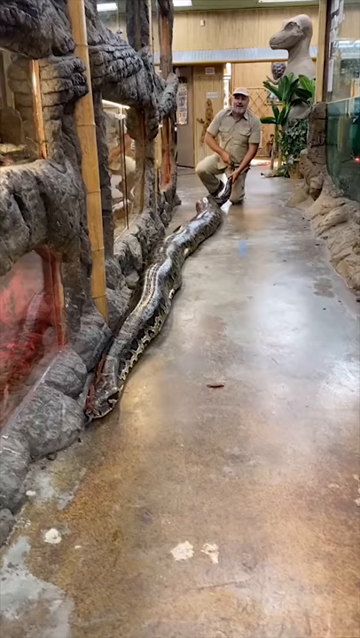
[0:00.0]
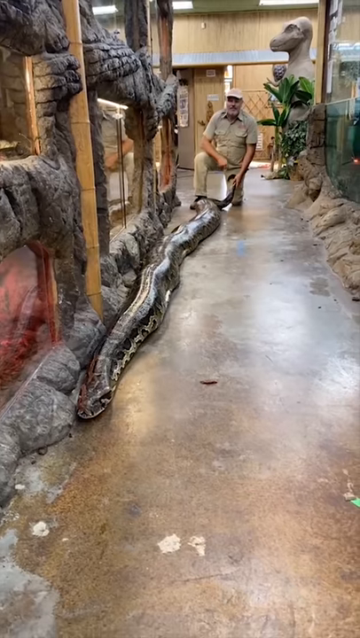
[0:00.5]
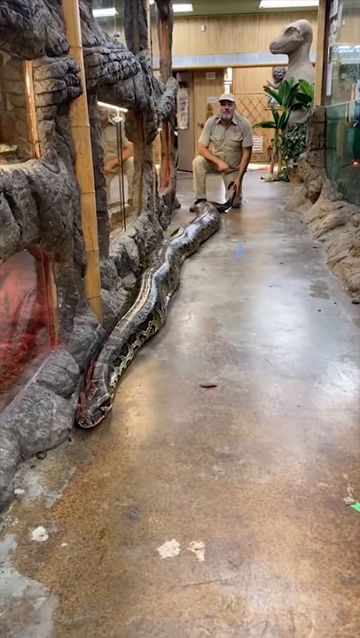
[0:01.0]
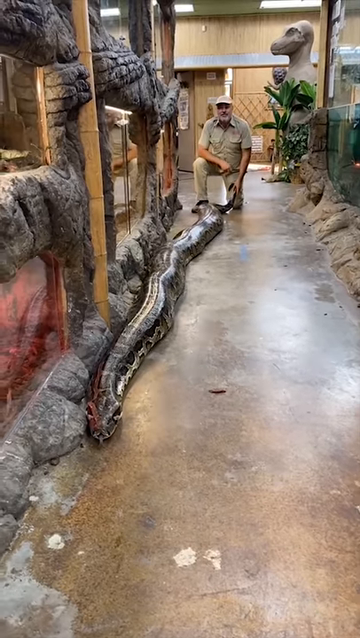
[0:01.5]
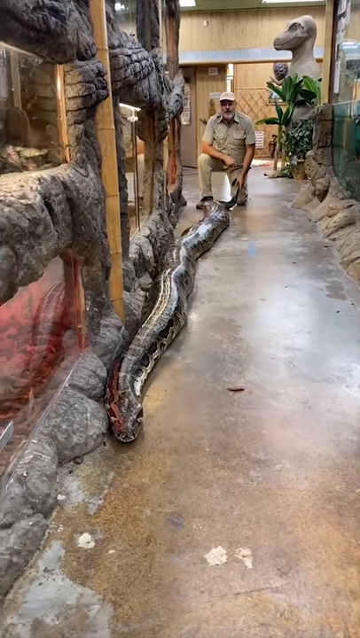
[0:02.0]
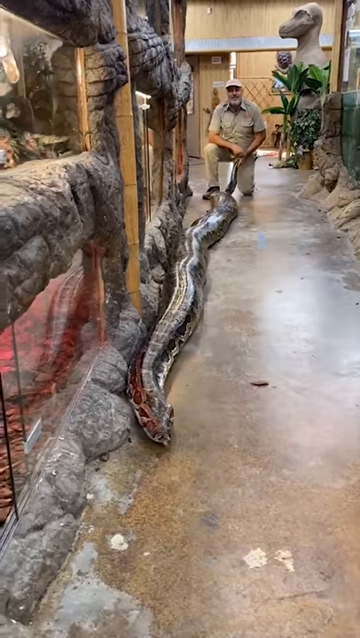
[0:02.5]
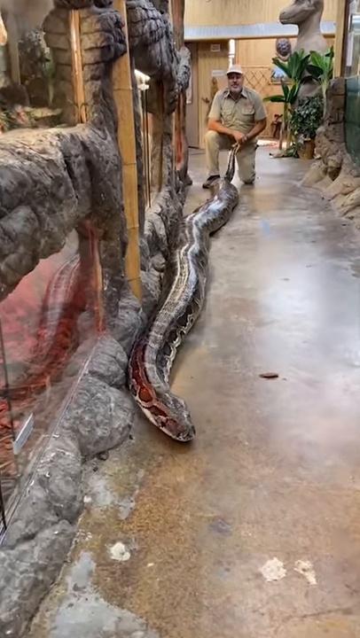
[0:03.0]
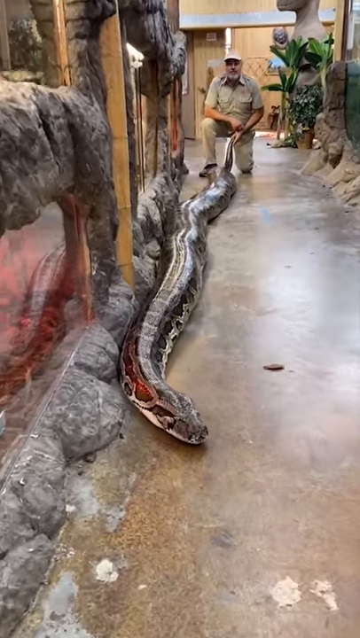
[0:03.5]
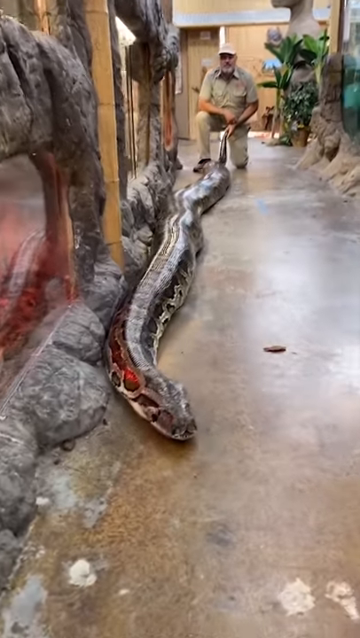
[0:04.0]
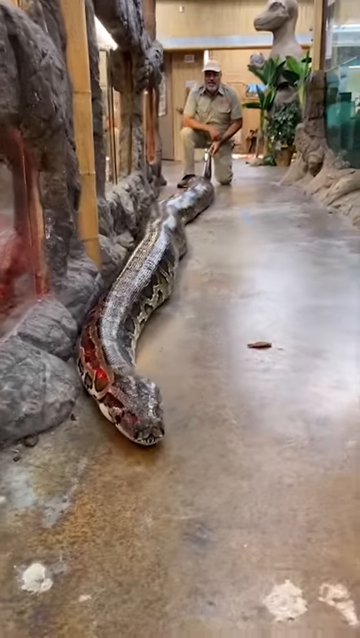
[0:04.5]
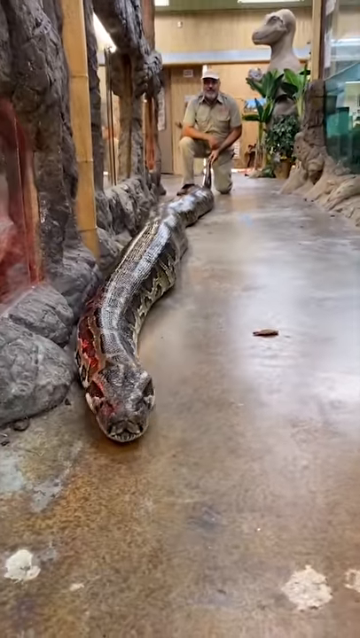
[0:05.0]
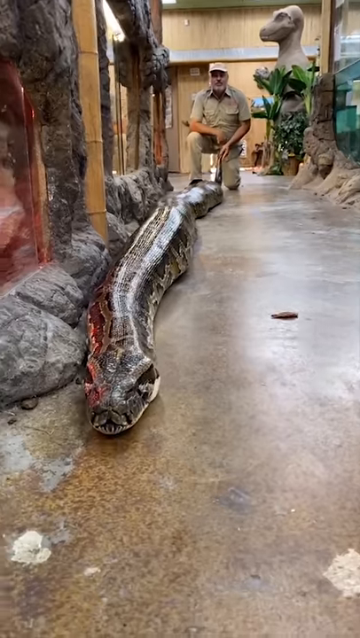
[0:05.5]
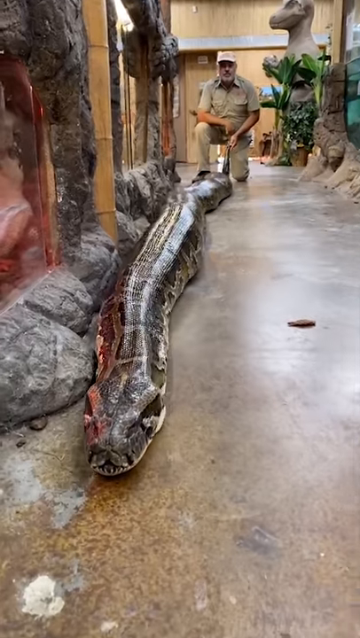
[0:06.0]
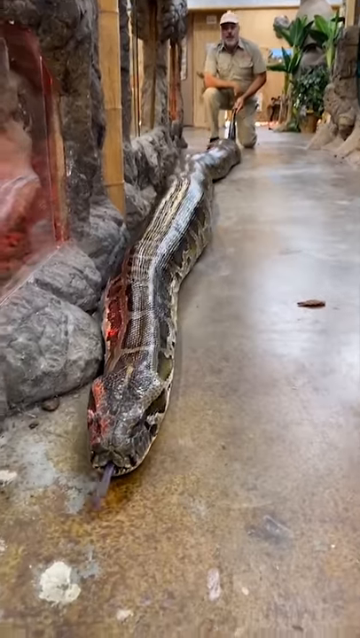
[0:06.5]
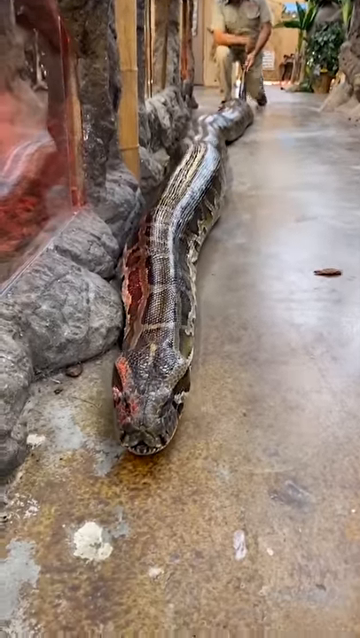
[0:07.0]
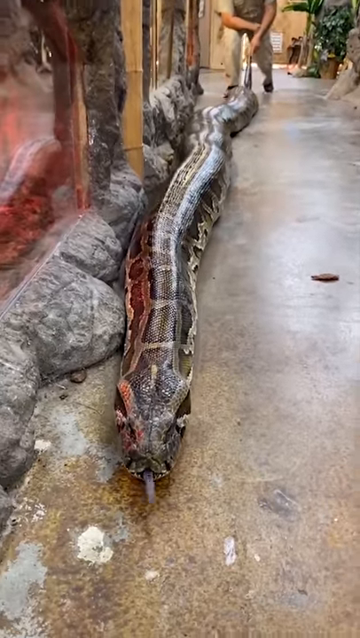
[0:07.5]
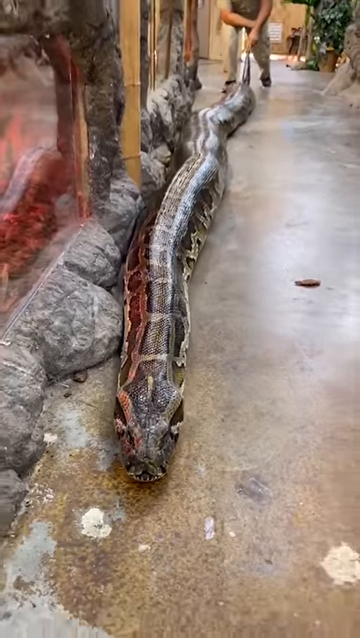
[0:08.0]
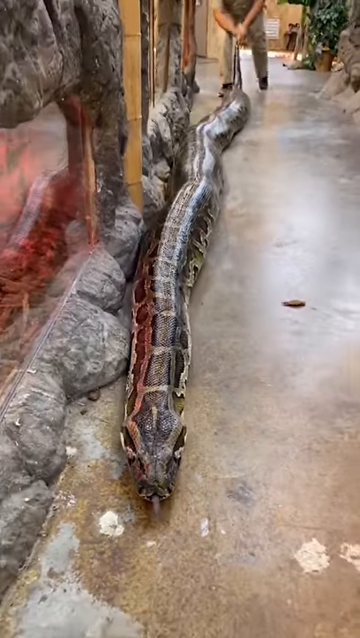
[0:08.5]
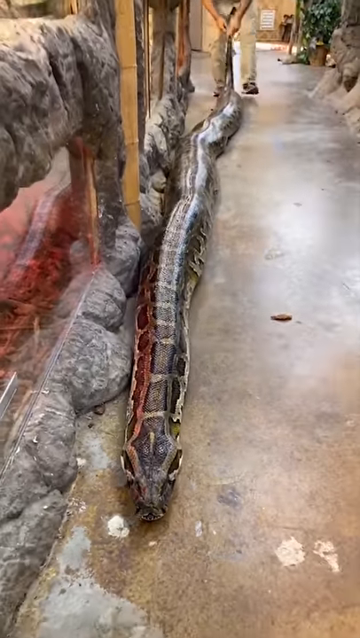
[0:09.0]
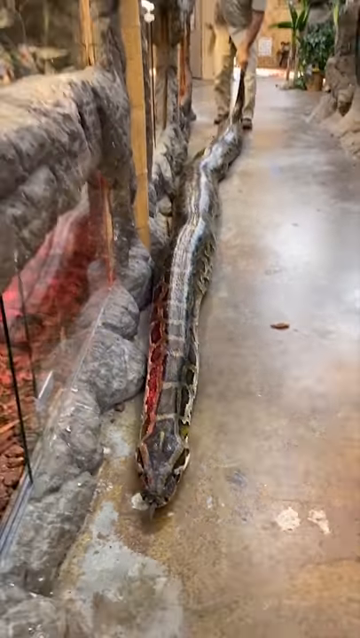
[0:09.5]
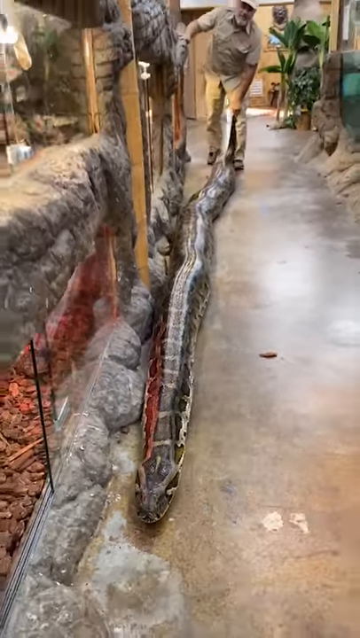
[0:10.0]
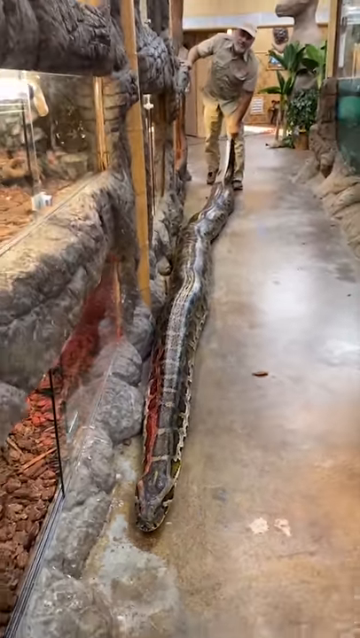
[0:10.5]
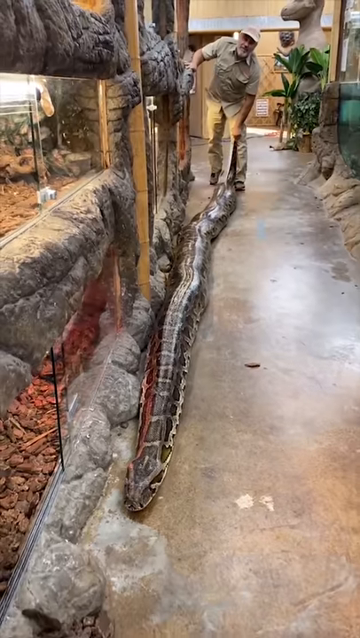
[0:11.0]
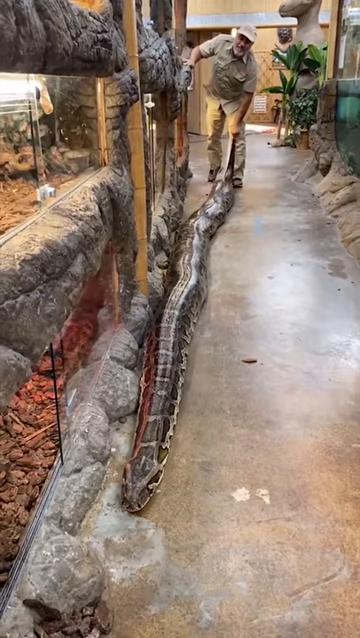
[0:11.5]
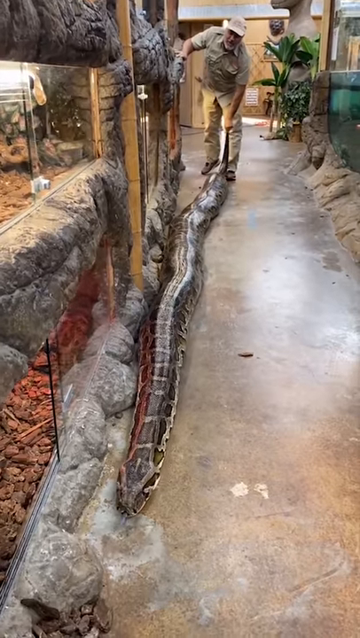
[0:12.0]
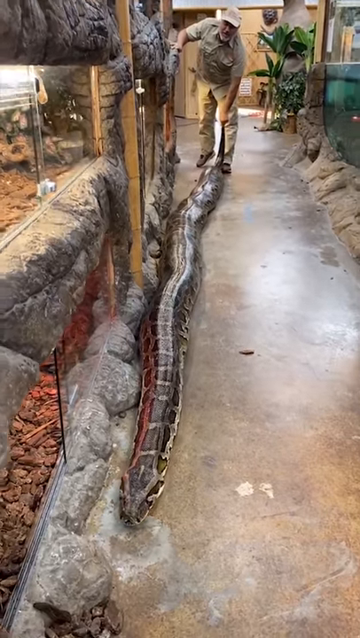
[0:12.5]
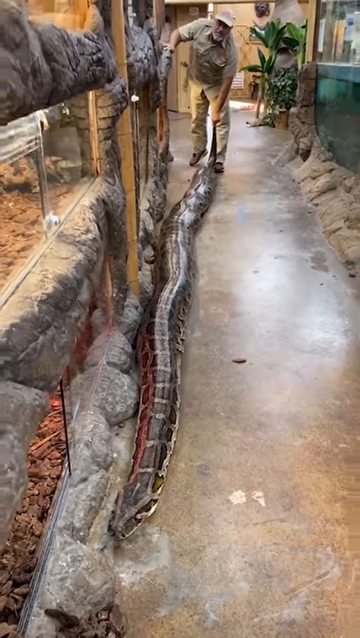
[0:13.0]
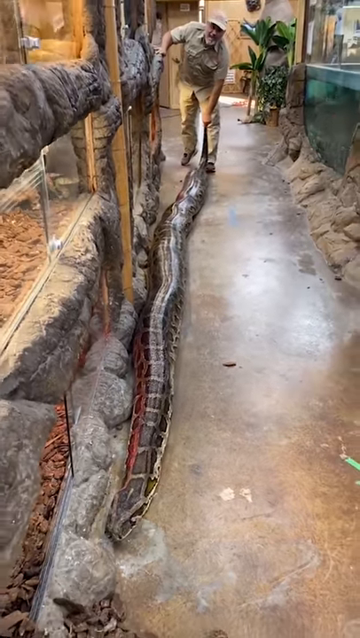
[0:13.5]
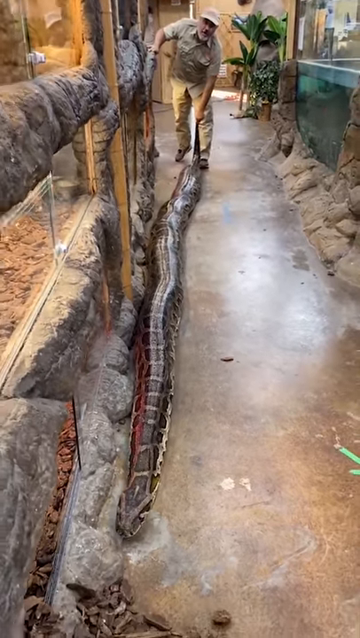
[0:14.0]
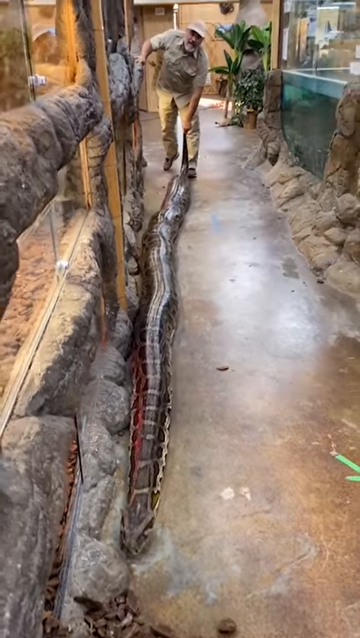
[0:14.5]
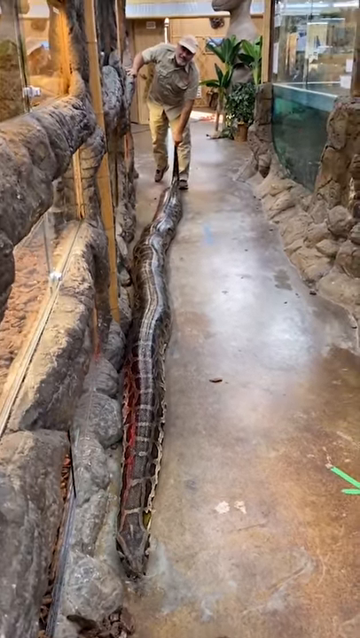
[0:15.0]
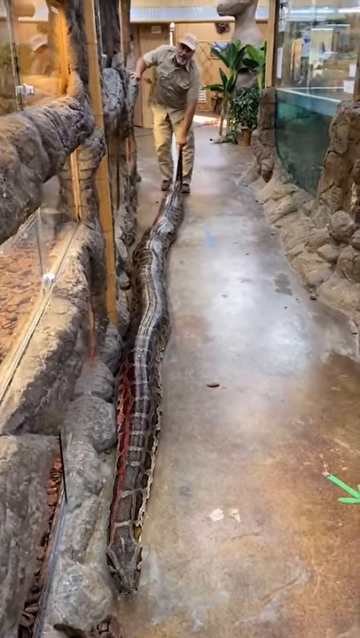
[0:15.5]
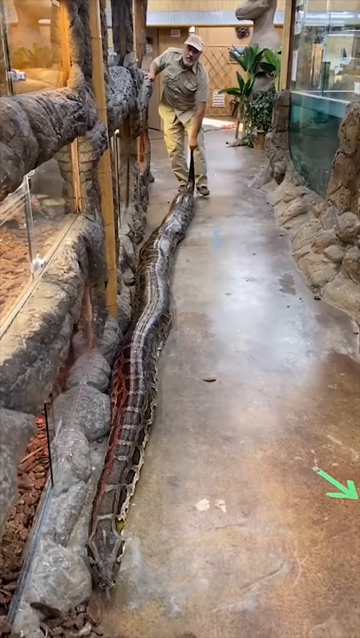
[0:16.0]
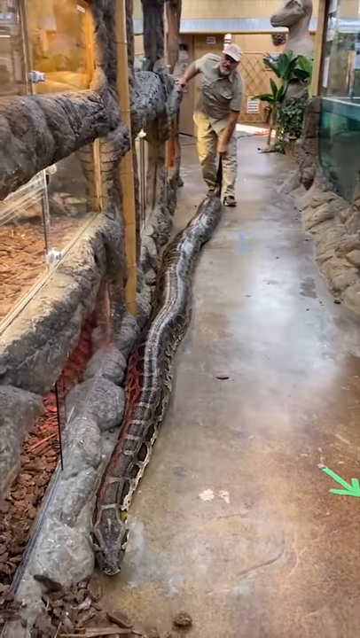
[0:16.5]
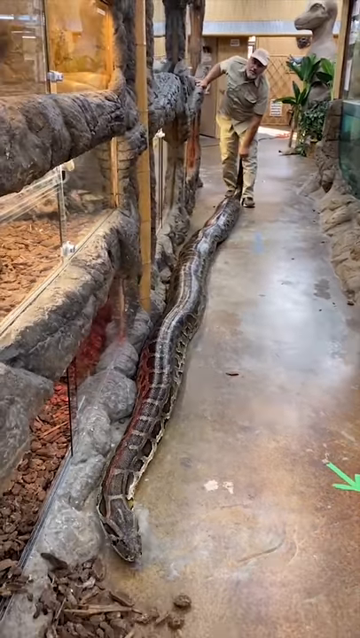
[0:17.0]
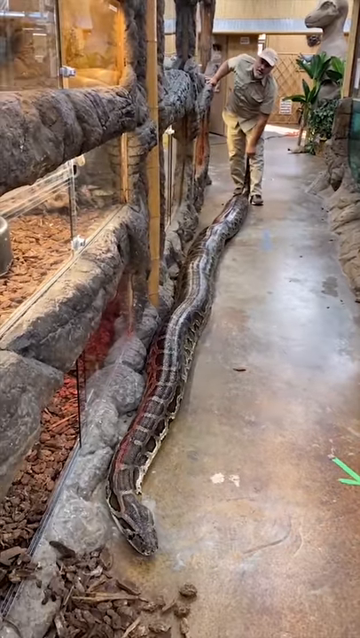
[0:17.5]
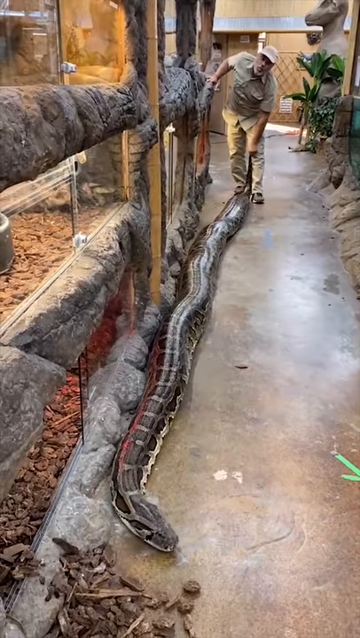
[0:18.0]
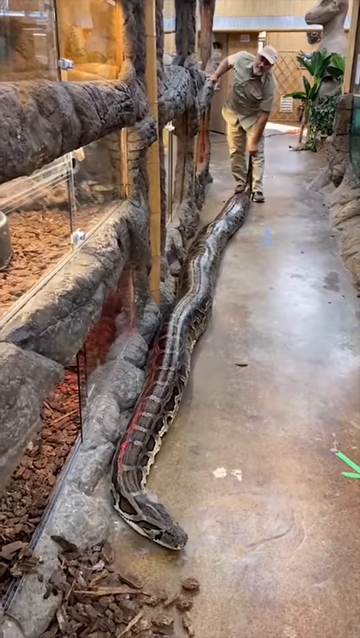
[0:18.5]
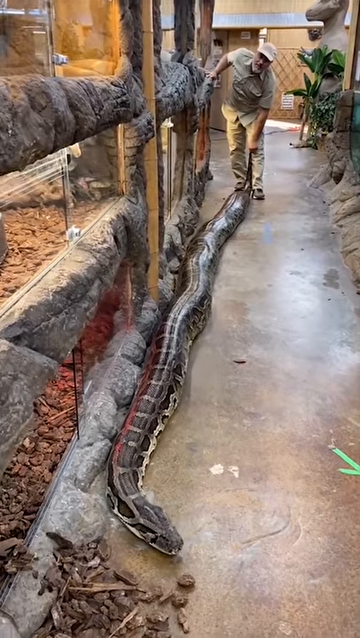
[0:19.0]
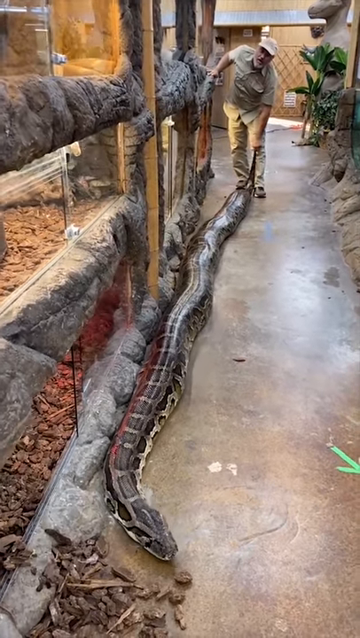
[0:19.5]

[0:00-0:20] A very long python is shown, probably in a reptile display at either a zoological area or a reptile store. The python looks to be probably about three men's lengths long, maybe somewhere from 12 to 18 feet, and it is very thick. It is out of its enclosure and is being handled by a gentleman who holds on to its tail as it crawls along a concrete floor toward the camera. The man wears a hat, a tan short-sleeved shirt and tan slacks, and he has a white beard. In the background there is a large reptile sculpture and a wooden office door.